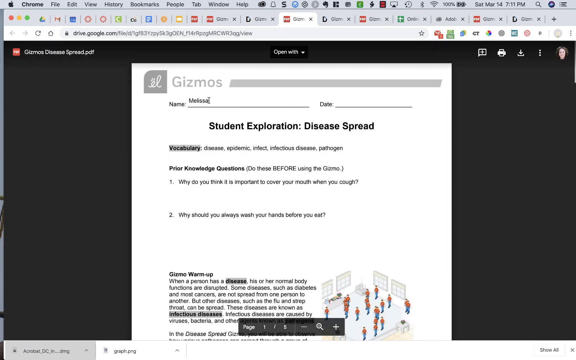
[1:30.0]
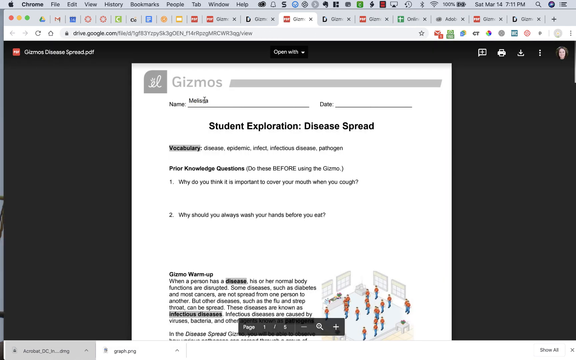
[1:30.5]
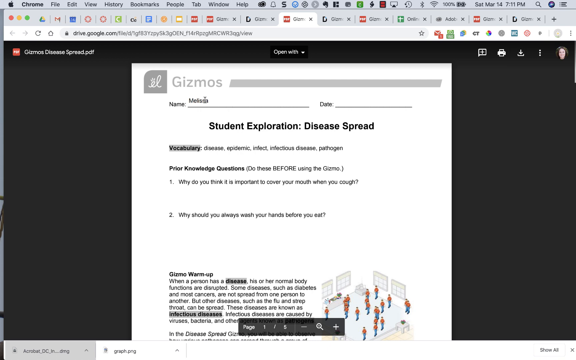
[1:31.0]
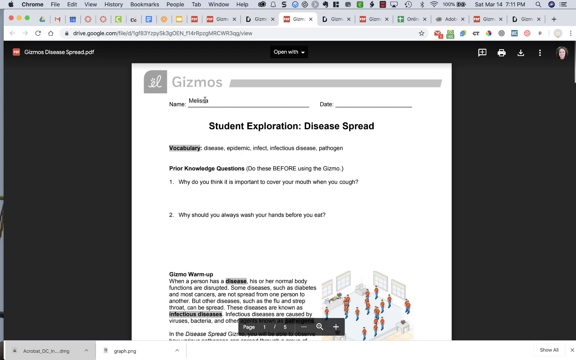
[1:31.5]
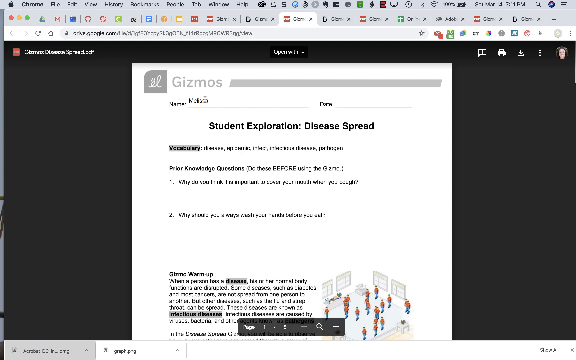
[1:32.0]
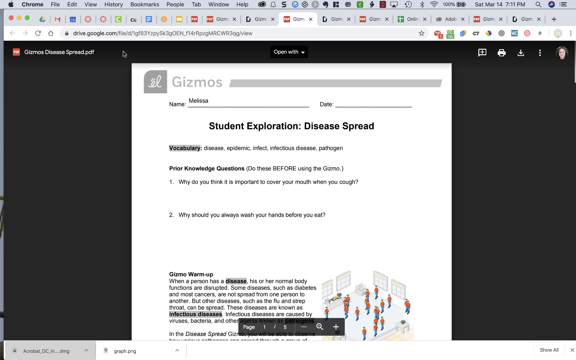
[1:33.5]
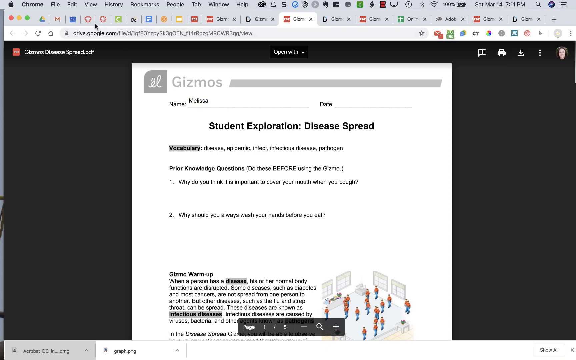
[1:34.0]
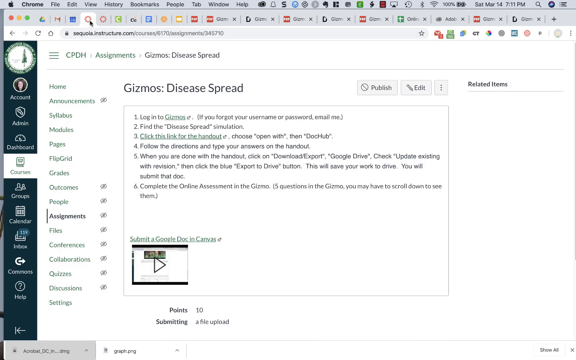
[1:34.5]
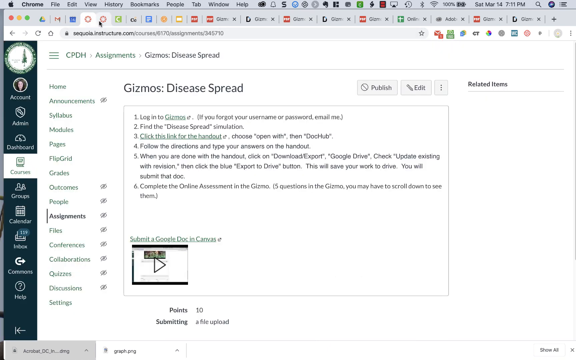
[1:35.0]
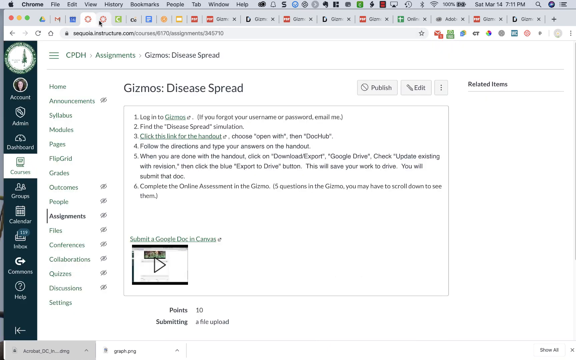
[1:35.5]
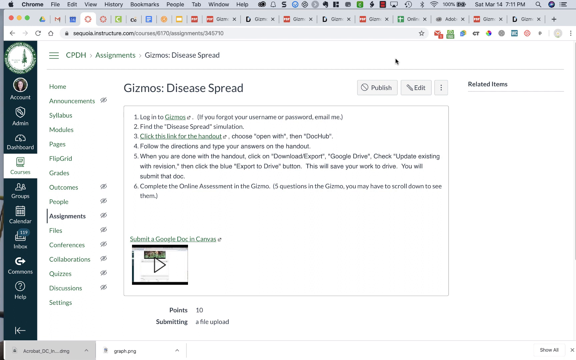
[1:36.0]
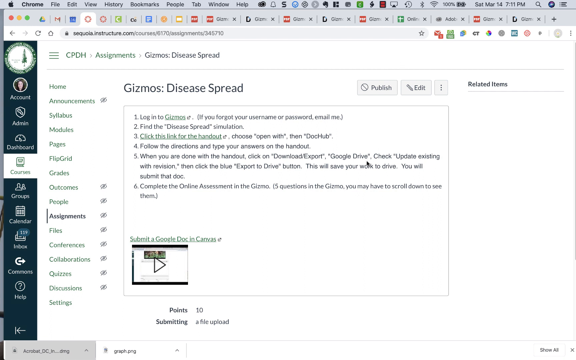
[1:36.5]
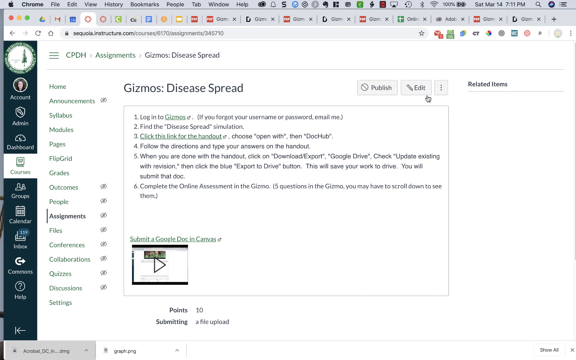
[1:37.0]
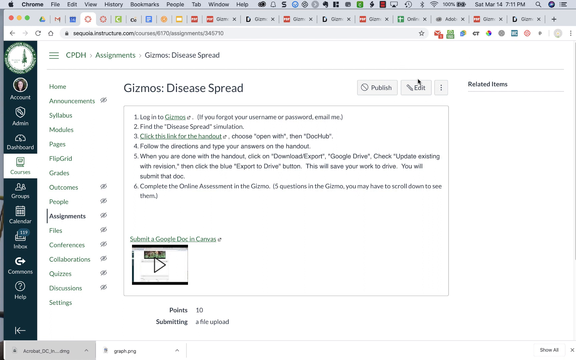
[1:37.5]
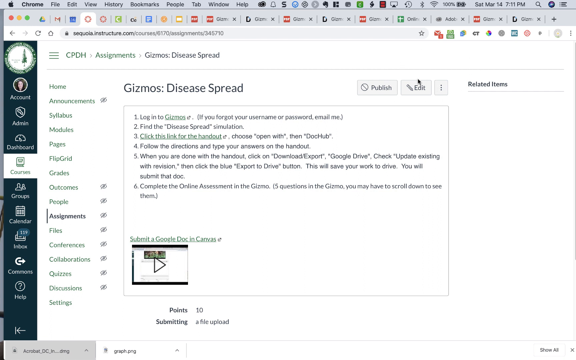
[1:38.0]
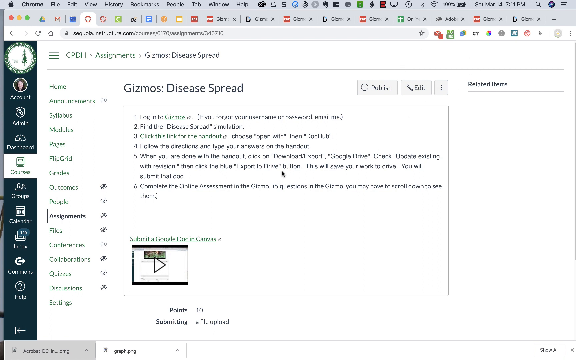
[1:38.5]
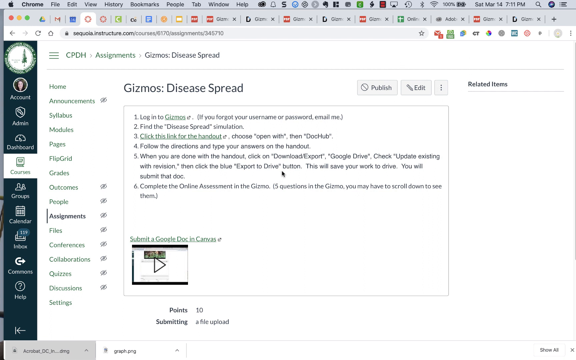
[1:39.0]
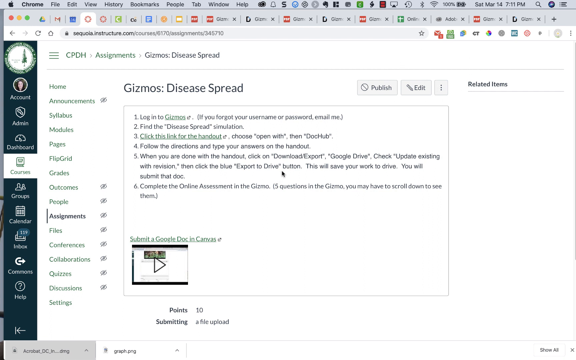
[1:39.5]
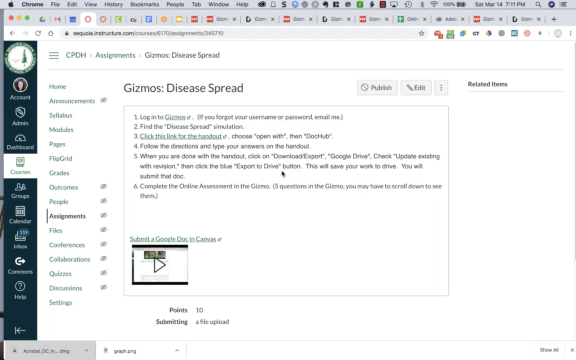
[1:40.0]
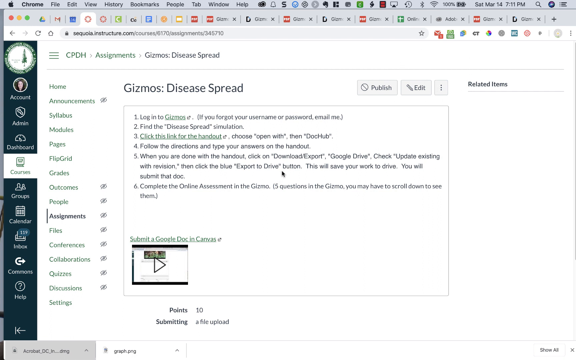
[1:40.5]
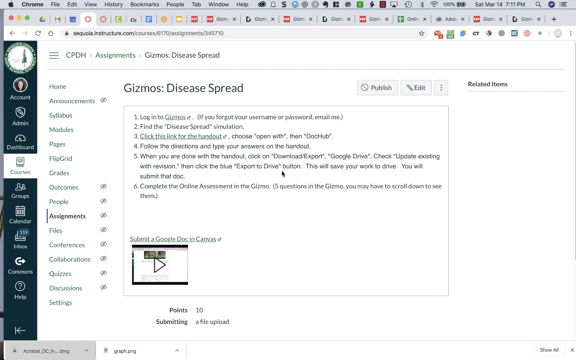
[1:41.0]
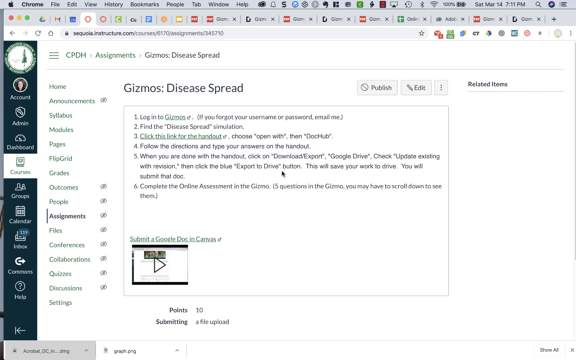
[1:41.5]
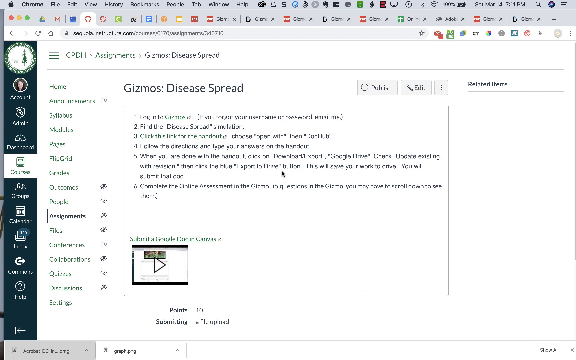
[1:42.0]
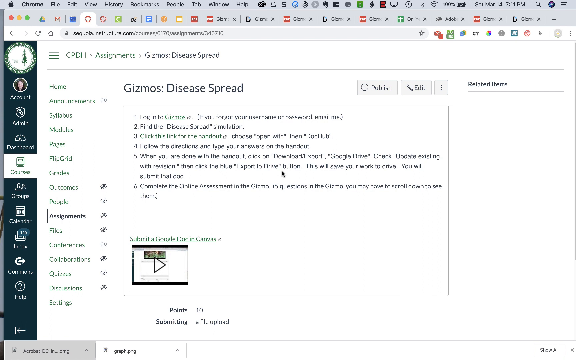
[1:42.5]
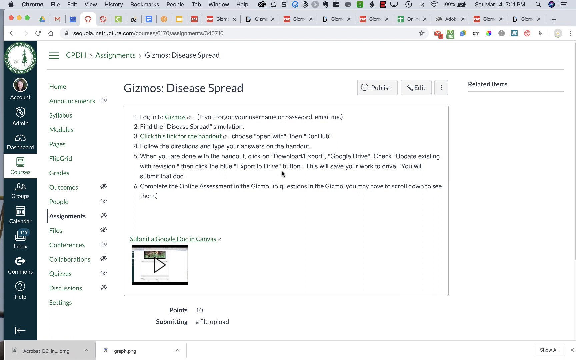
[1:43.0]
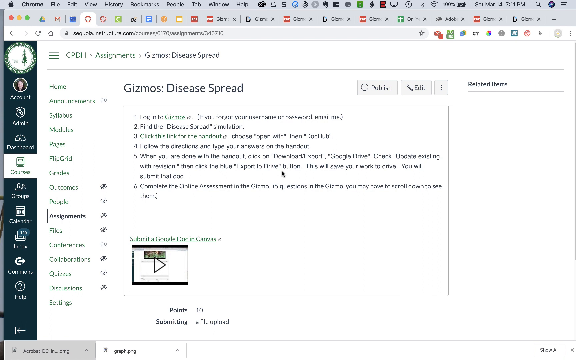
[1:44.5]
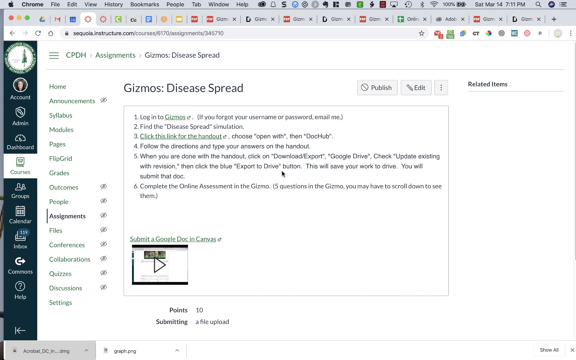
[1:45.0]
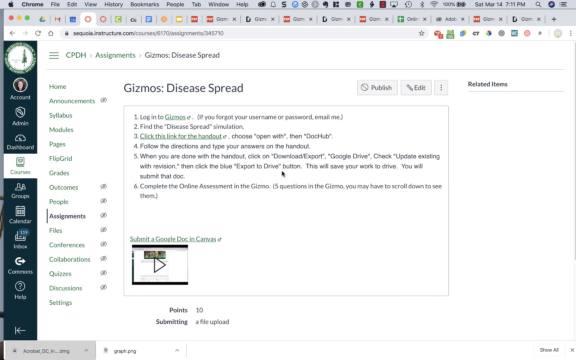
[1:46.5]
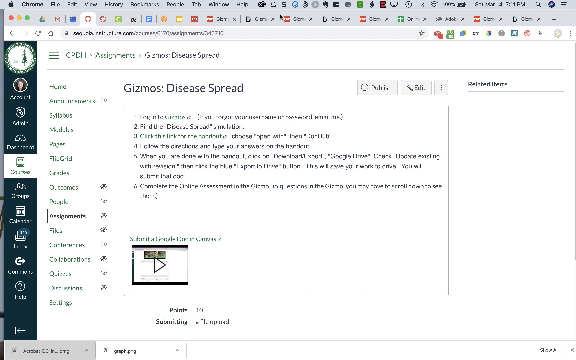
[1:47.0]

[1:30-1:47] A page for gizmosdiseasespread.pdf shows "Melissa" under the name section, and the date is blank. Text on the screen says "student exploration disease spread vocabulary disease epidemic infect infectious disease and pathogen prior knowledge questions do these before using the gizmo one why do you think it's important to cover your mouth when you cough and two why should you always wash your hands before you eat." A drawing shows people in a room wearing an orange shirt and blue pants, all in the same outfit. Text for a gizmo warm-up follows: "when a person has a disease his or her normal body functions are disrupted some diseases such as diabetes and most cancers are not spread from one person to another but other diseases such as the flu and strep throat can be spread these diseases are known as infectious diseases." The user hovers over the name Melissa, then clicks open a tab for sequoia.instructure.com, which shows text about logging into gizmos and finding the disease spread simulation. They move the mouse around the screen, and the view stays like that.